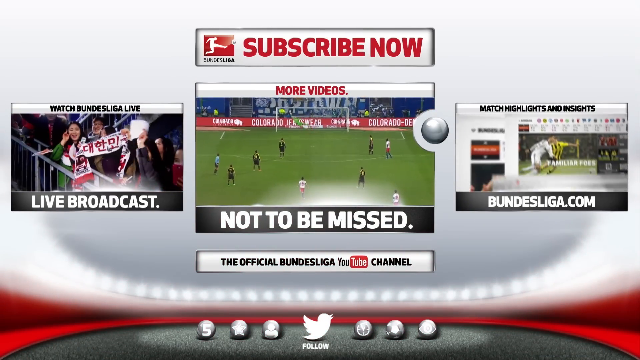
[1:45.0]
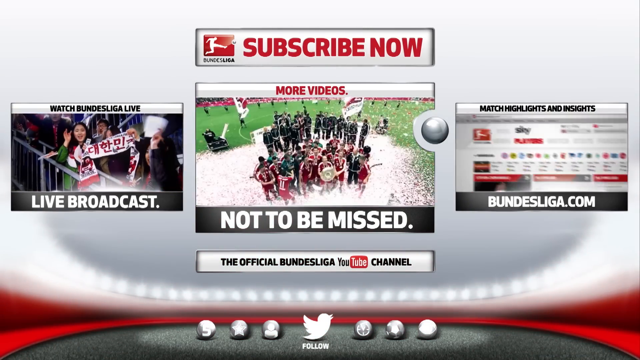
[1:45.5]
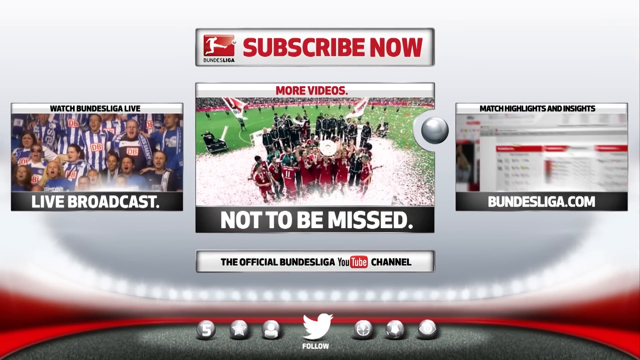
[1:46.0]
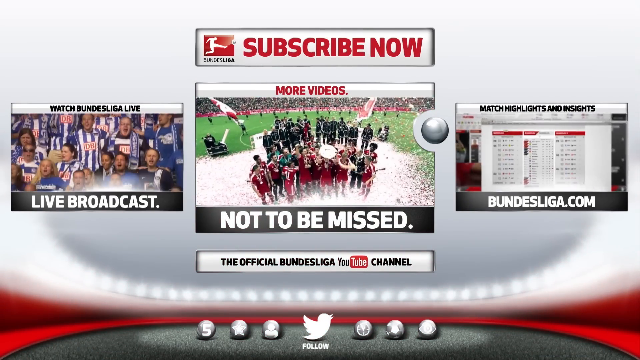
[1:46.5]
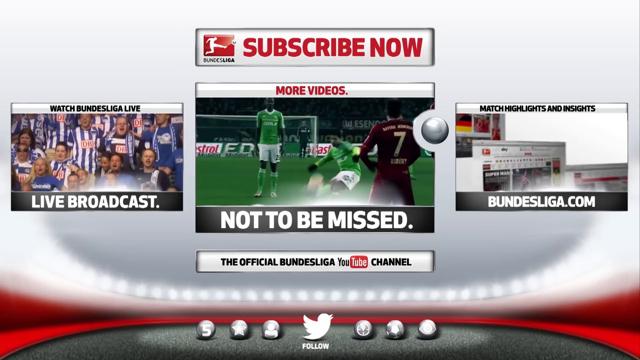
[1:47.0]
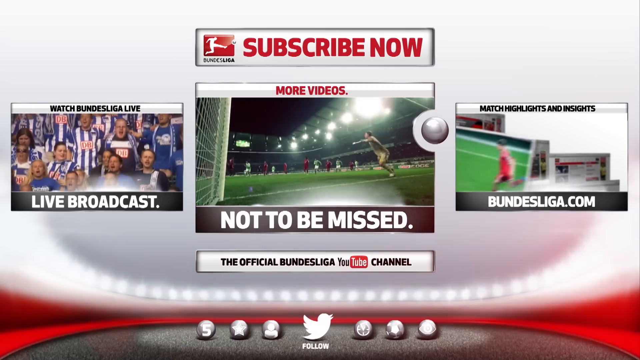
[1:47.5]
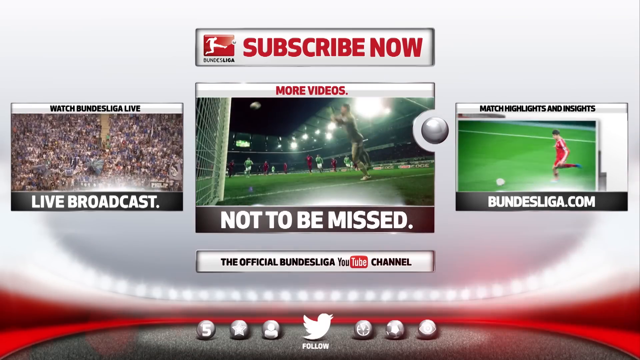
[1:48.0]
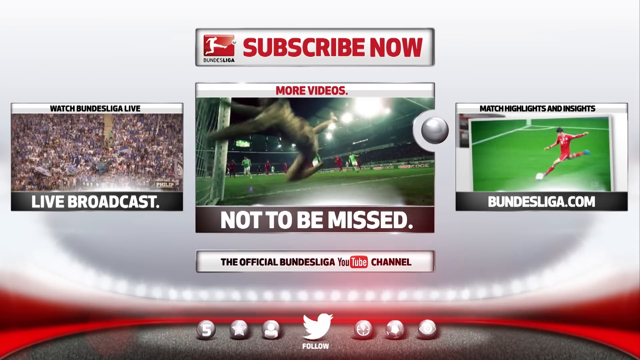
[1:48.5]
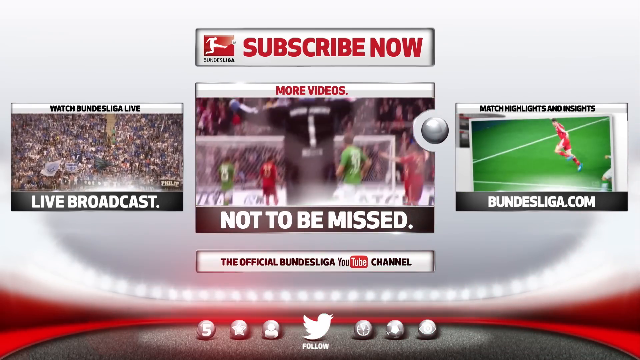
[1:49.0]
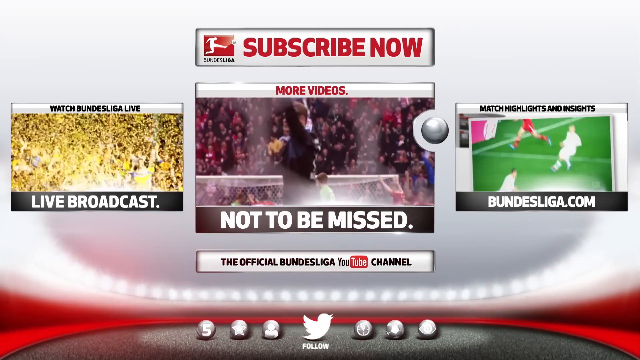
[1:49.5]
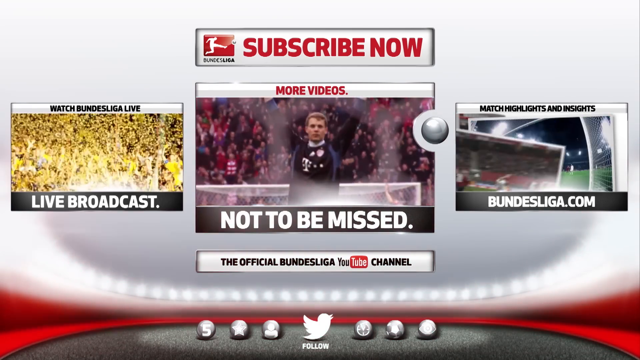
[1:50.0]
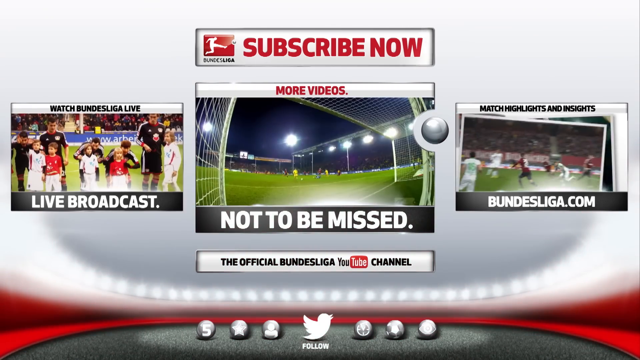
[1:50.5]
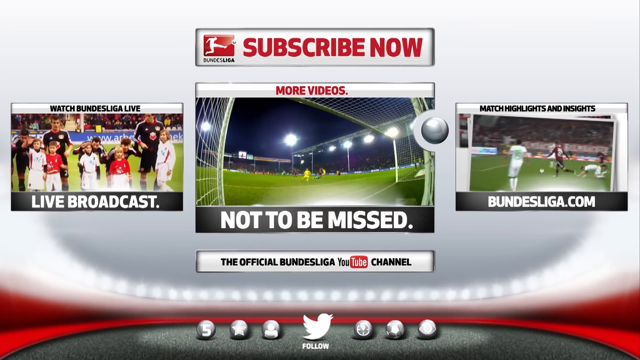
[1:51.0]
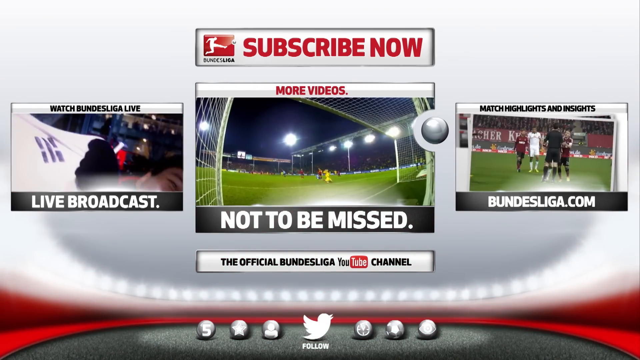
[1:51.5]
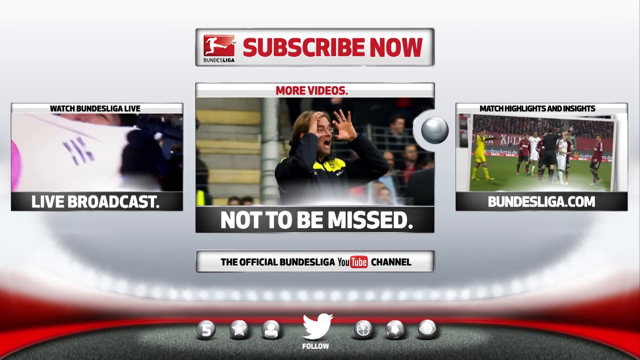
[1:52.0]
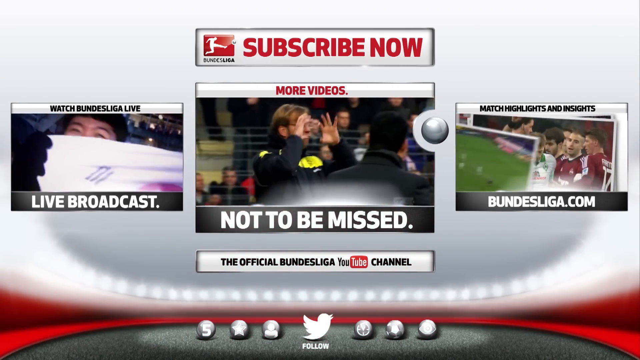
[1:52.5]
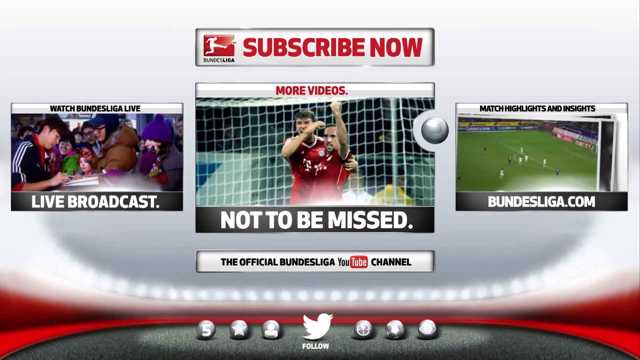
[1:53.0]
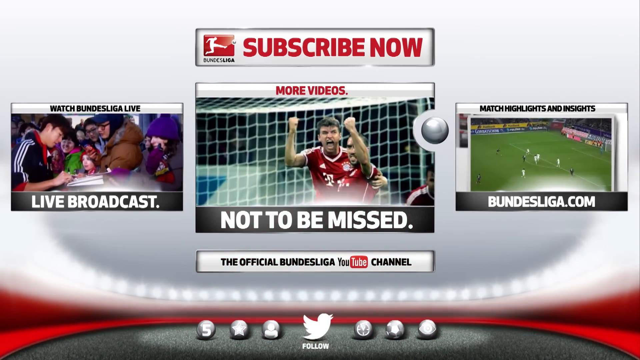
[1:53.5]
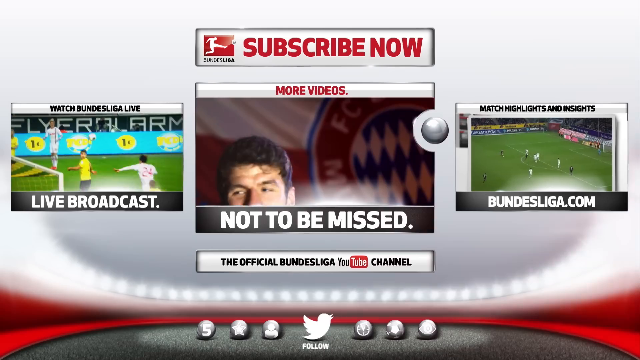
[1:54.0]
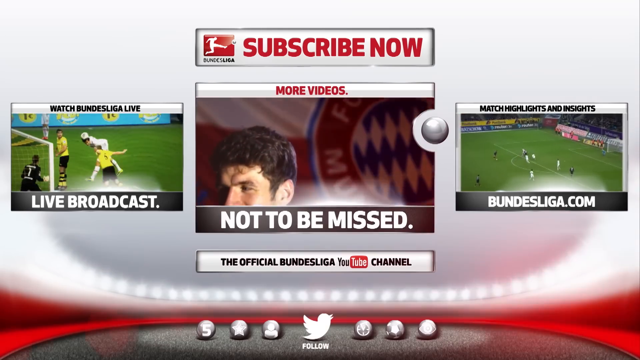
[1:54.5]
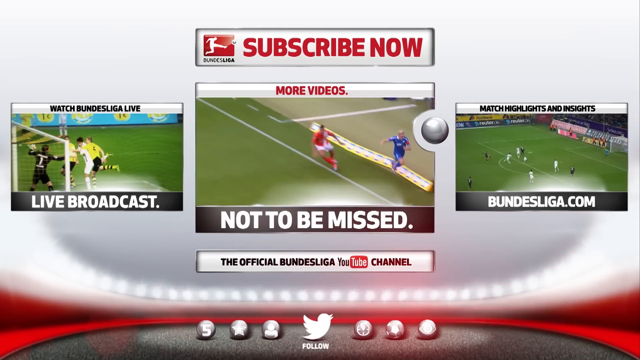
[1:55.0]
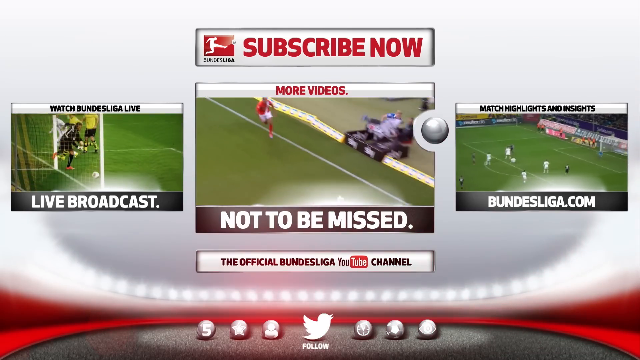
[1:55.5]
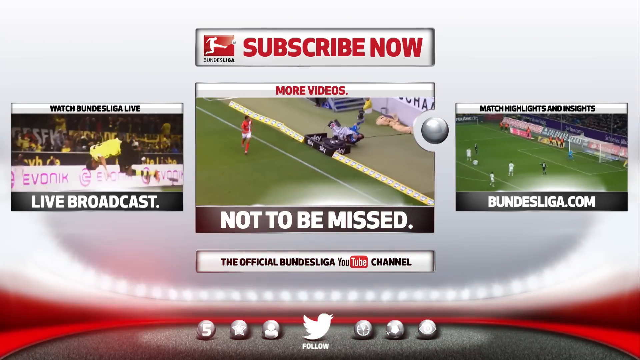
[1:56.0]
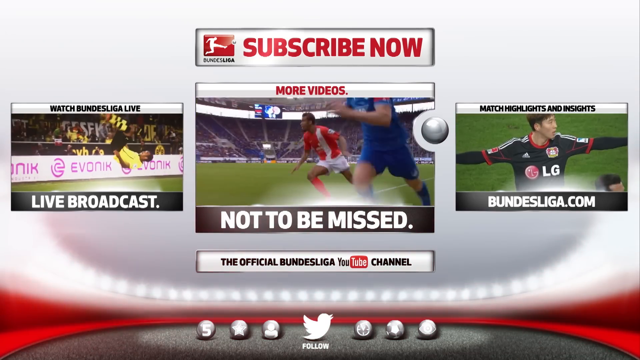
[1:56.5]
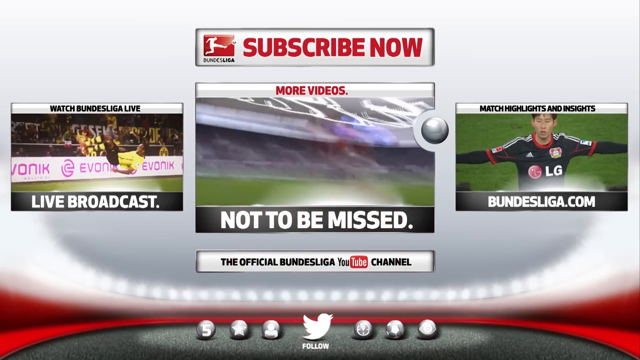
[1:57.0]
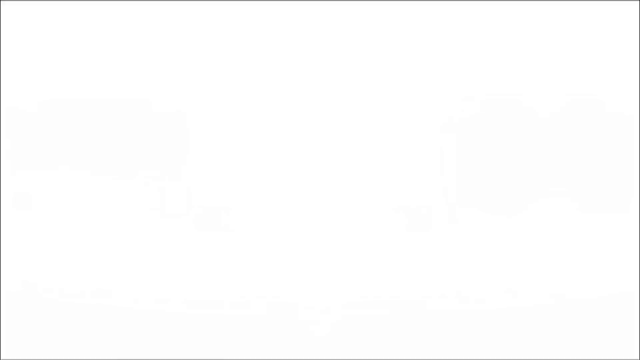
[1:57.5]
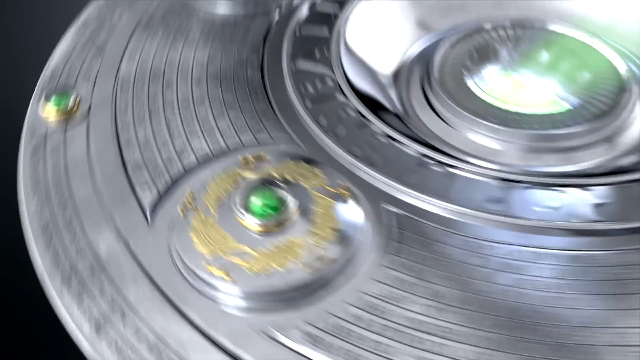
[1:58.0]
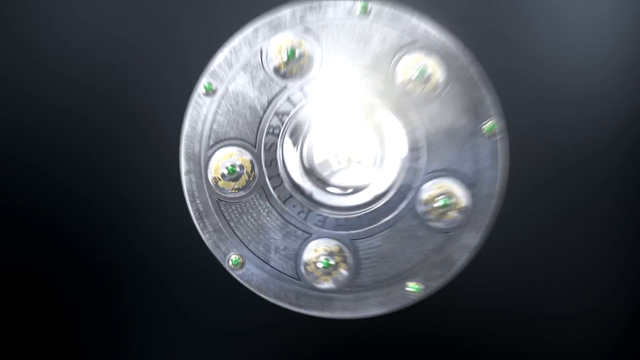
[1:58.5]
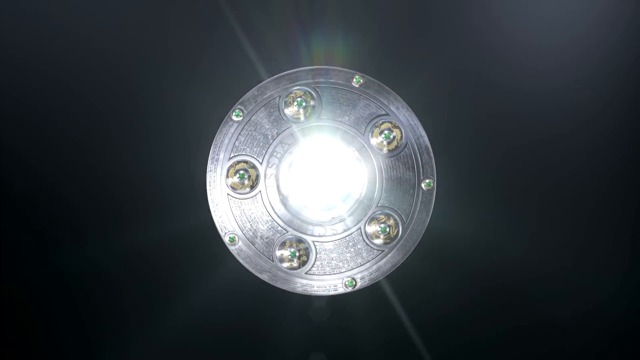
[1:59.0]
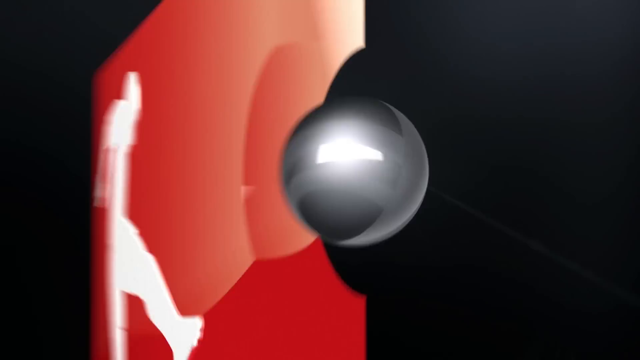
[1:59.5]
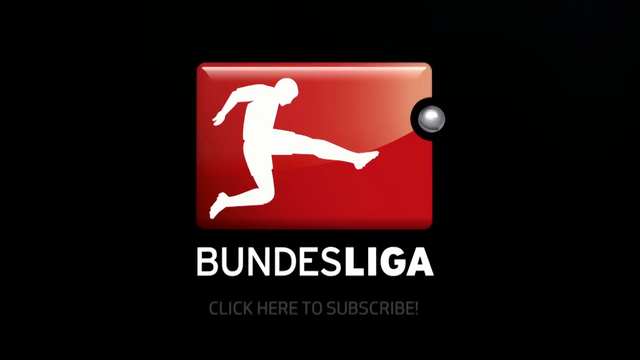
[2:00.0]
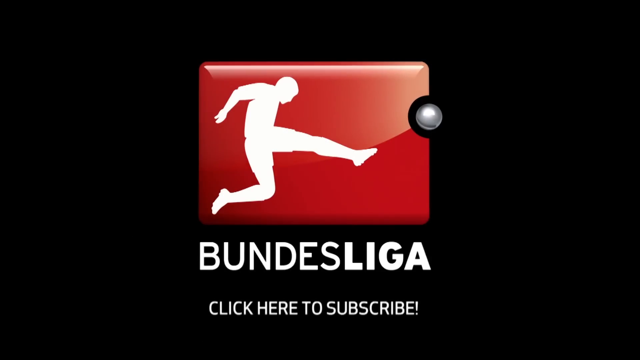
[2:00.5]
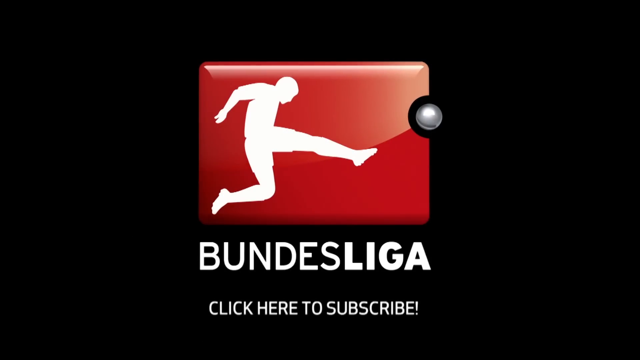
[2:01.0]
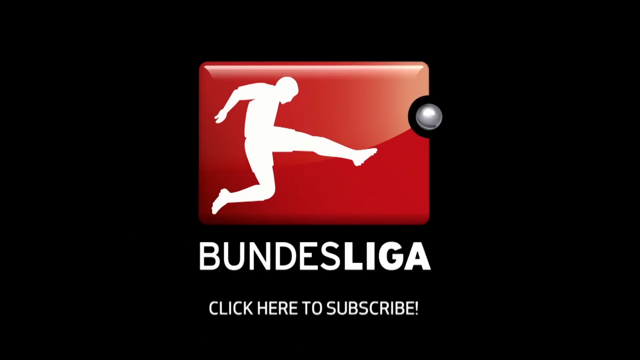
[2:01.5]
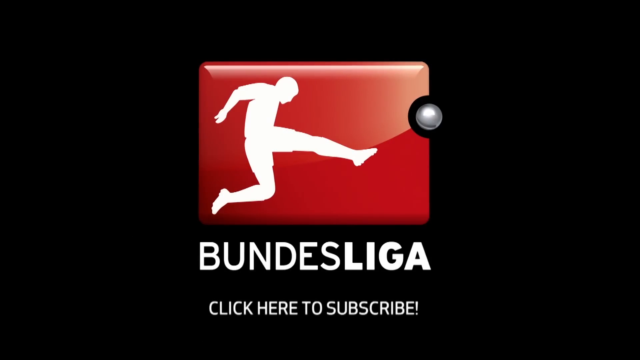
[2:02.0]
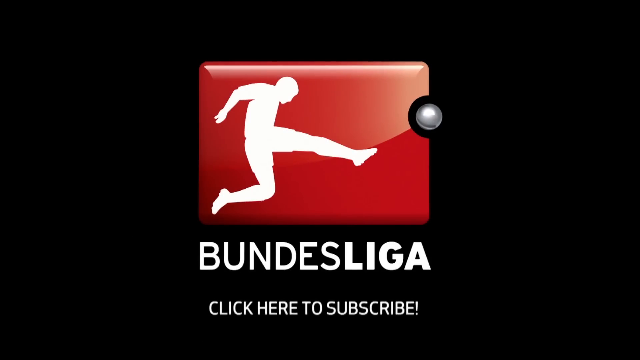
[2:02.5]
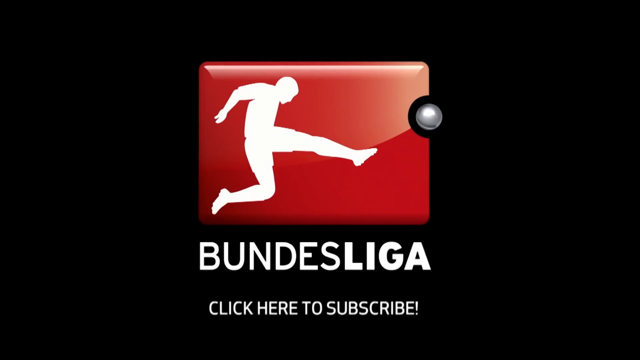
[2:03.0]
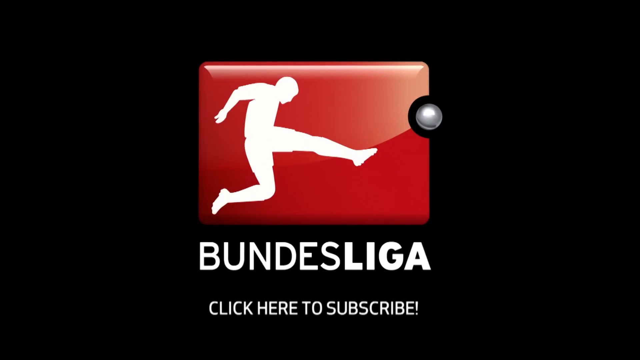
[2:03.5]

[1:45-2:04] An end screen reads "subscribe now" at the top, and below that "more videos not to be missed" over the centermost, largest image. To the left it reads "watch Bundesliga live broadcast", with some players in blue shown there; to the right it reads "Bundesliga.com" and "match highlights and insights"; and at the bottom right is "sub now". Along the bottom, below everything, it reads "the official Bundesliga YouTube channel". The images are not still: video plays in them, showing recaps of different games. At the end the screen reads "Bundesliga click here to subscribe".